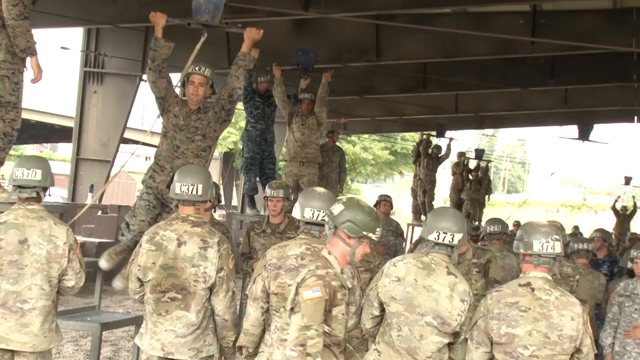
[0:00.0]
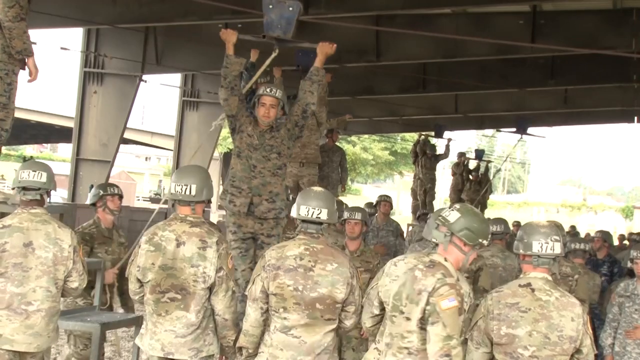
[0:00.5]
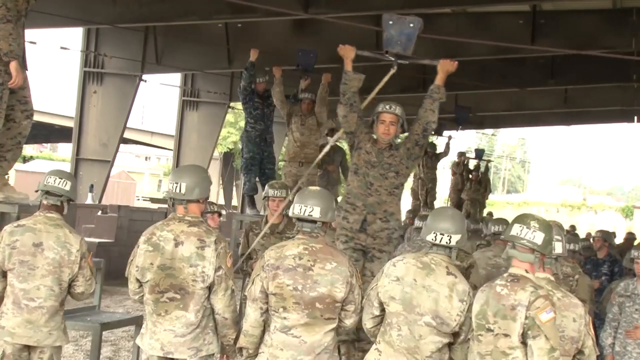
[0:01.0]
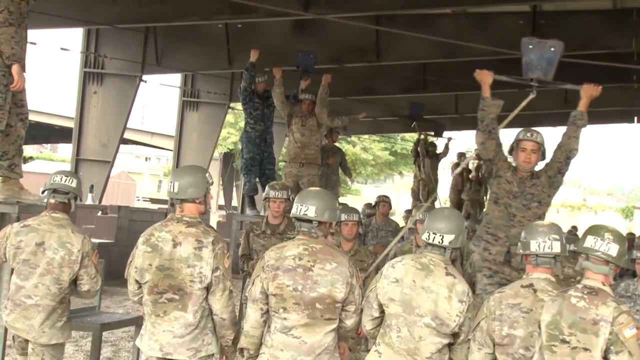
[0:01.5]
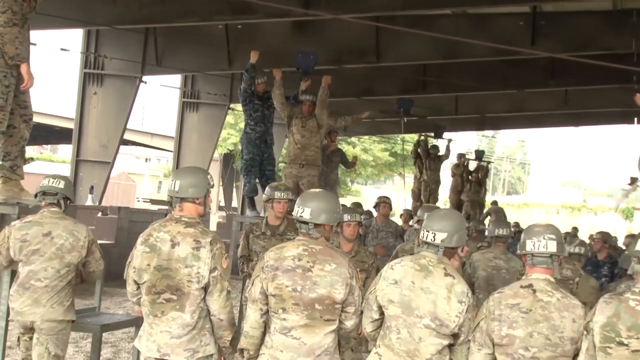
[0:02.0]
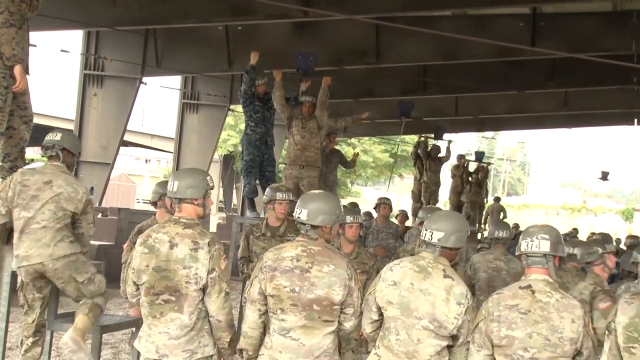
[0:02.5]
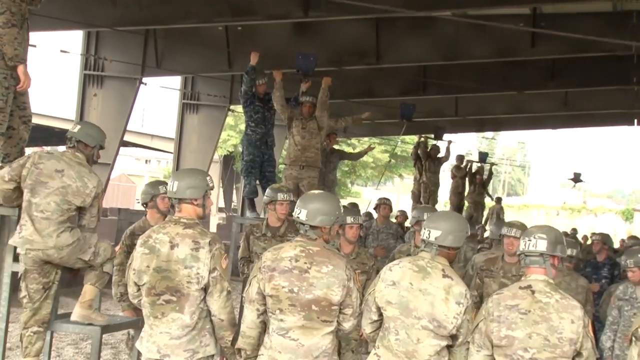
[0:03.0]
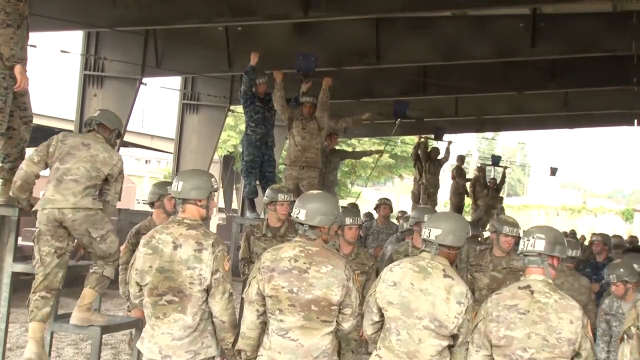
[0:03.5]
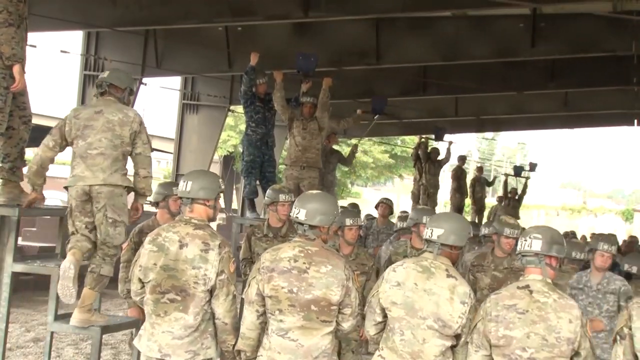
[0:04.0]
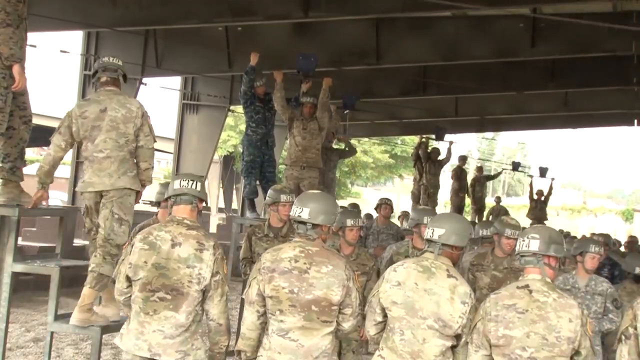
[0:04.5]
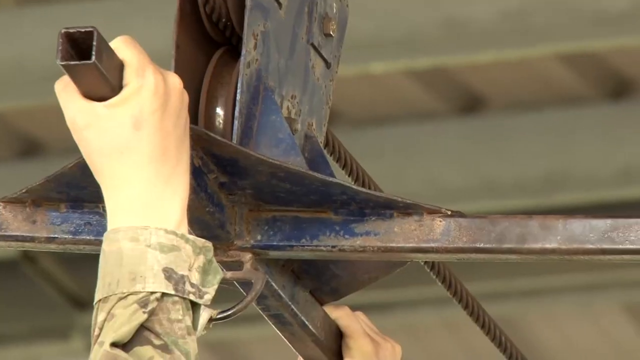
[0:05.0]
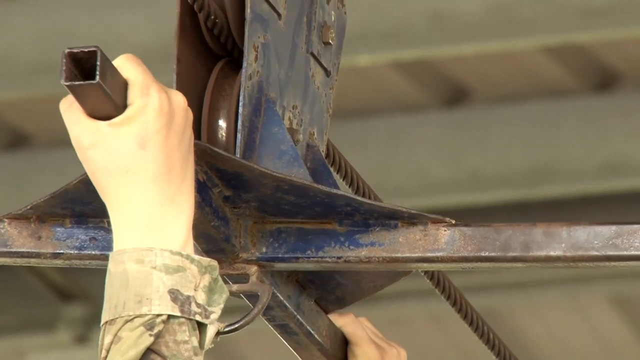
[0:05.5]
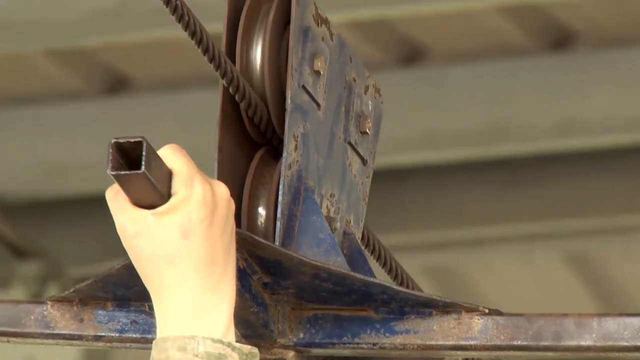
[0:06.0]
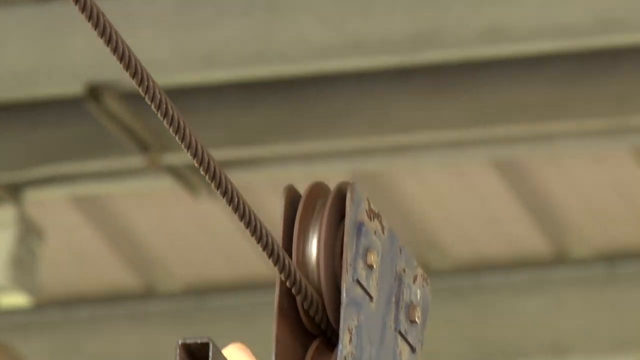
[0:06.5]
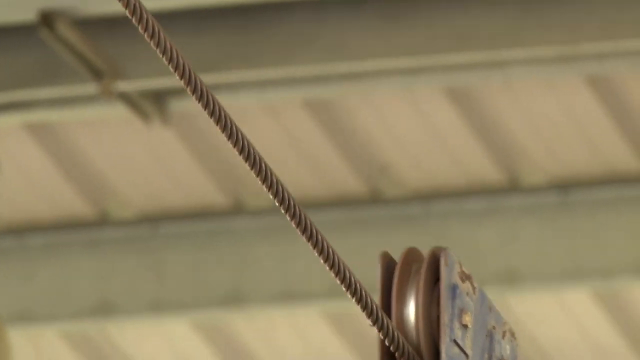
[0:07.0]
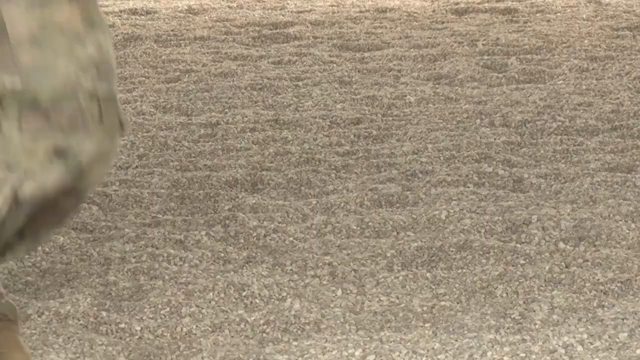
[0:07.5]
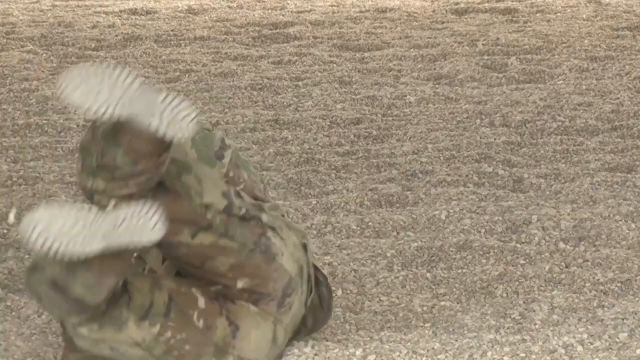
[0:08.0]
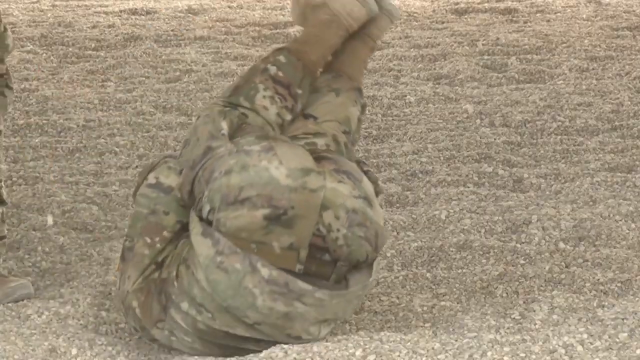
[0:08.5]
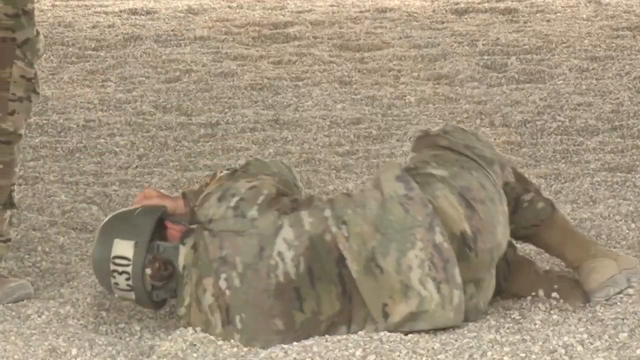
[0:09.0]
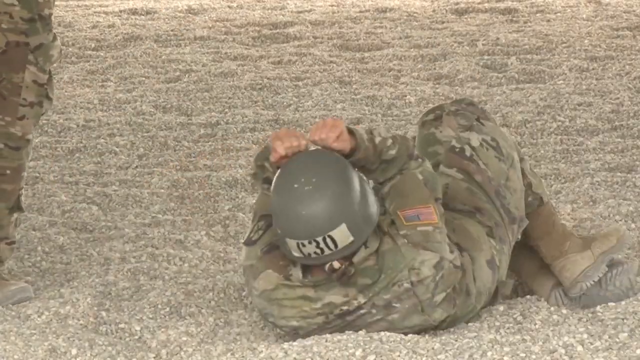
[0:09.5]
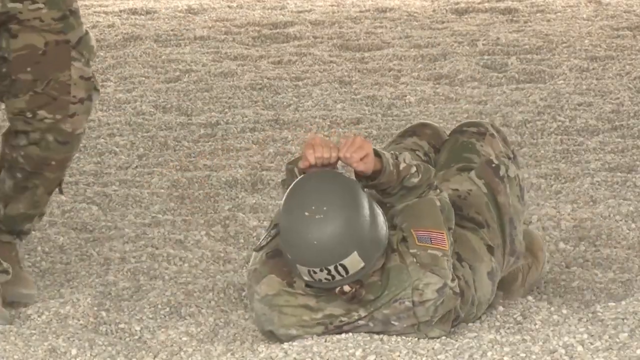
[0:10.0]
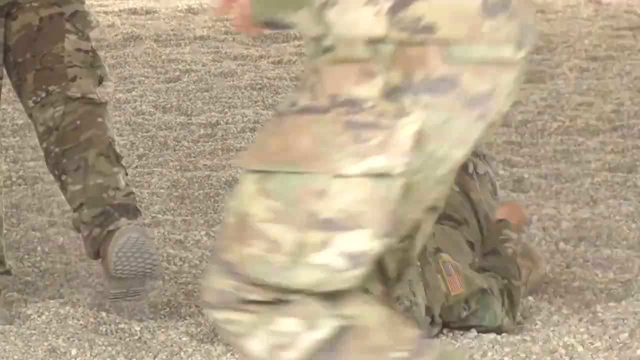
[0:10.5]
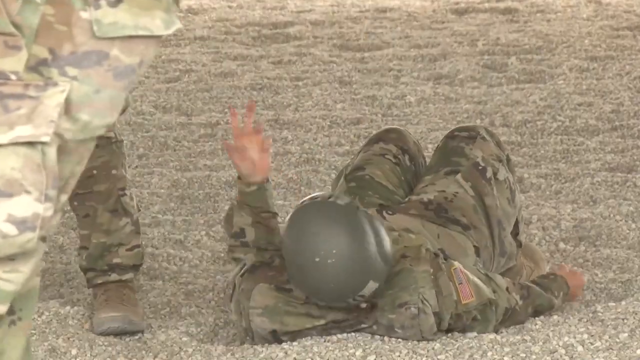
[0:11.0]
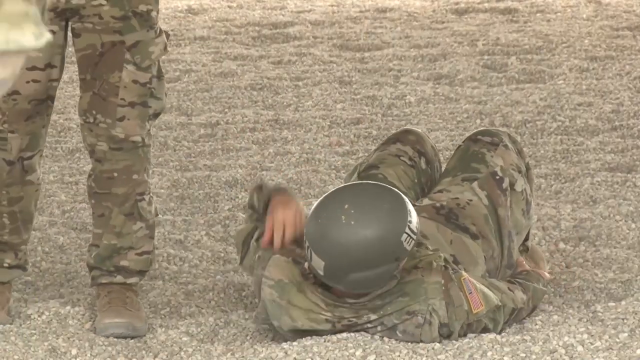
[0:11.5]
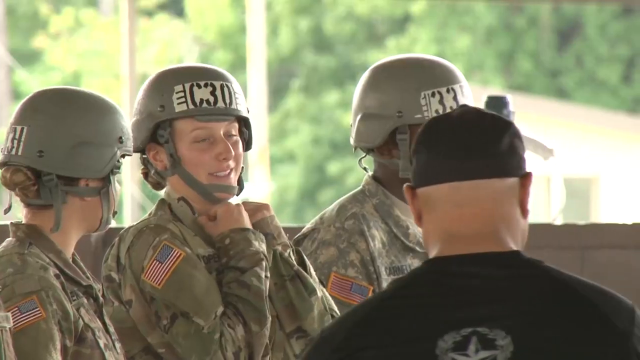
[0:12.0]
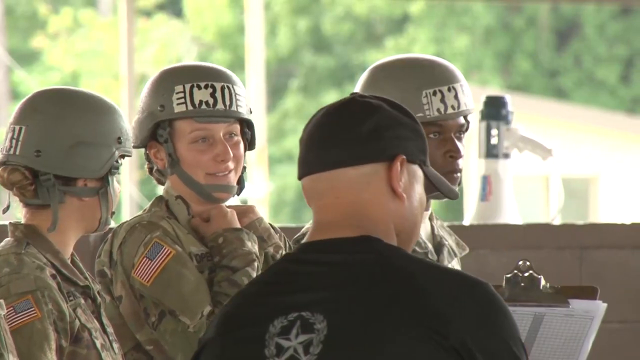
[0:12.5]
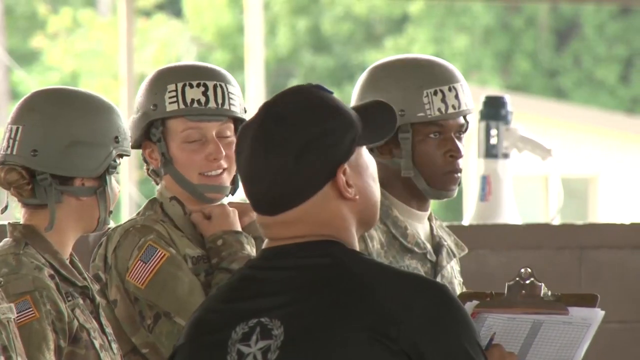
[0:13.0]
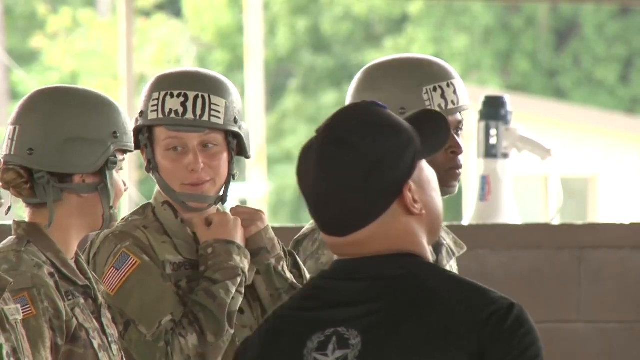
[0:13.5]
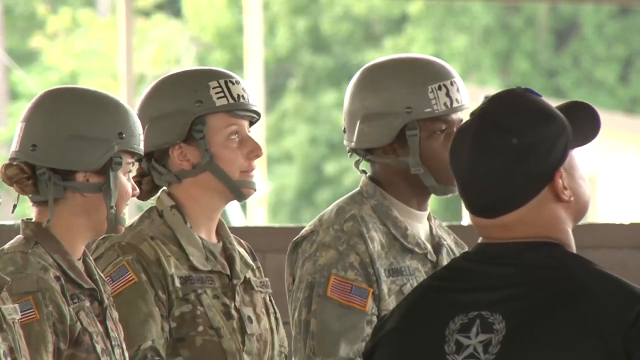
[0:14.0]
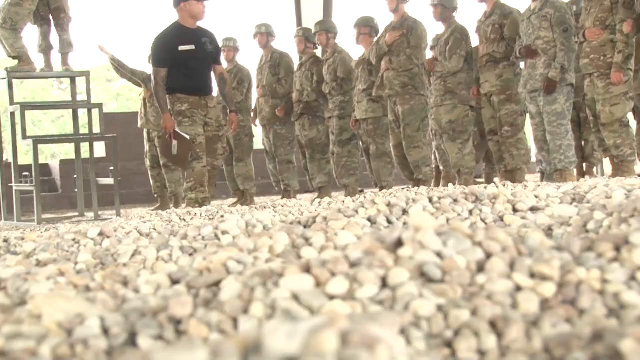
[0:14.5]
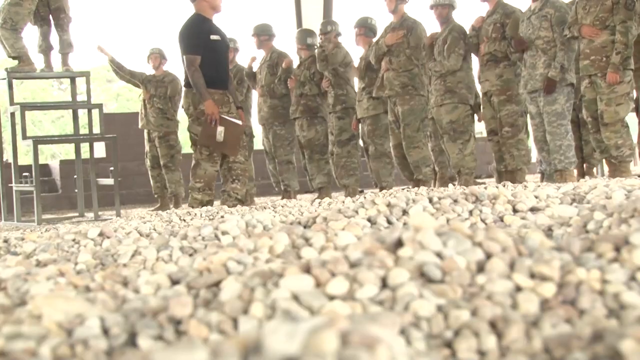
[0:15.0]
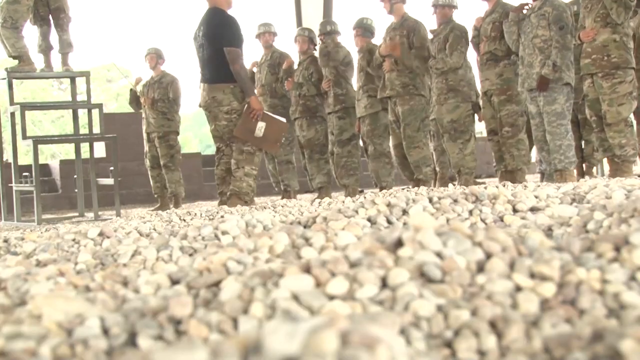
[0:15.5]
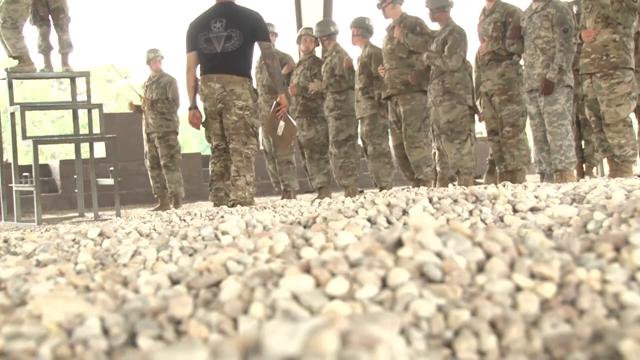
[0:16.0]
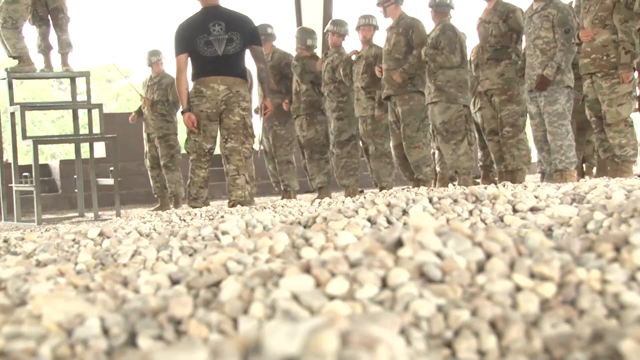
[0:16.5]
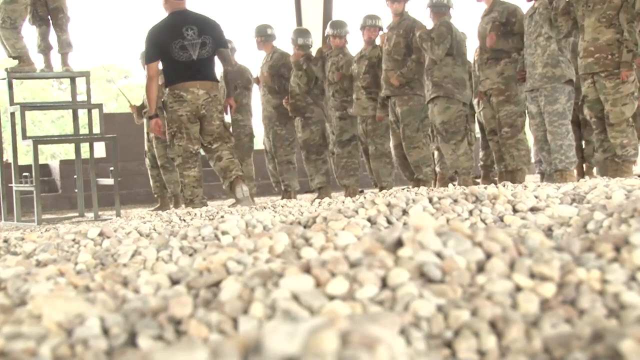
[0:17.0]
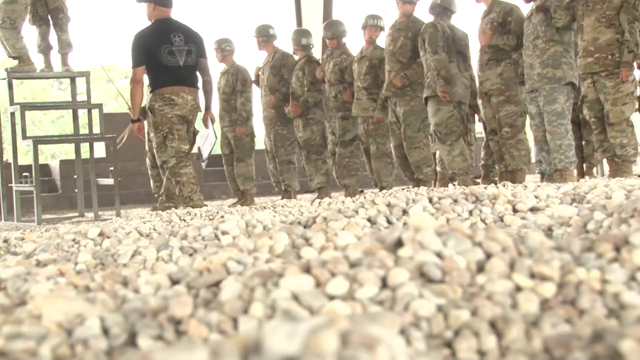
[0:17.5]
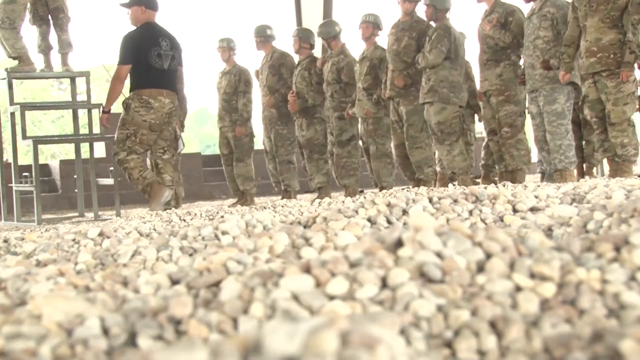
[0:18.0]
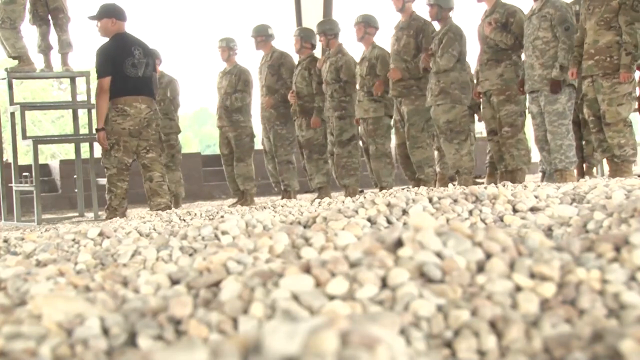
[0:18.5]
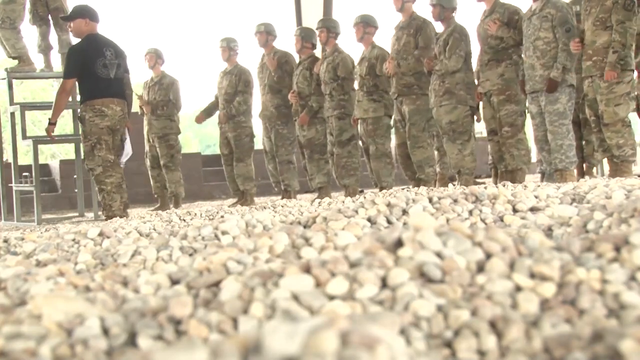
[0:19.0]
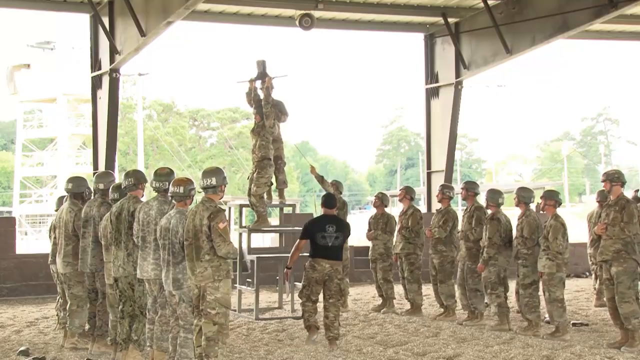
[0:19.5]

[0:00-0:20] Many men wear military fatigues, camouflage tops and pants, and some kind of hard hats or protective helmets. One man at the top of the screen hangs on to something attached to a cable and slides down to the right. A military man in fatigues and a helmet falls to the ground and covers his head with his fists. A United States flag is on the arm of one of the soldiers, so they are apparently U.S. military. Another man wears just a black cap and a black shirt. Another person, in a black top and camouflage pants, holds a clipboard. The ground is covered in smooth-looking rocks, like those in a riverbed. Soldiers lined up in a formation in front of him make gestures with their arms and hands.